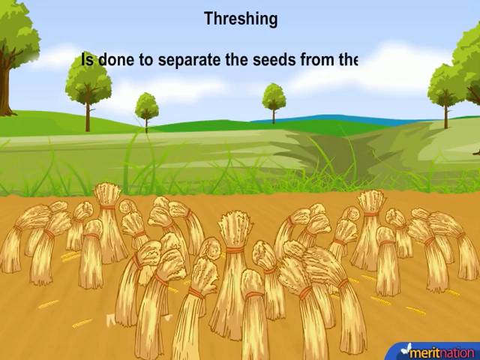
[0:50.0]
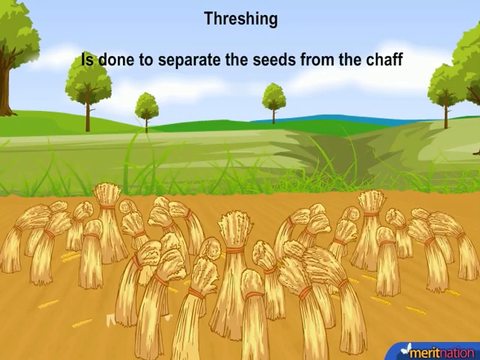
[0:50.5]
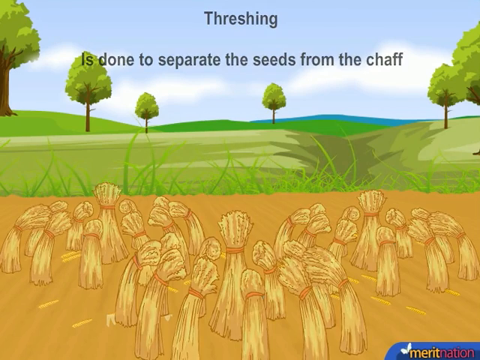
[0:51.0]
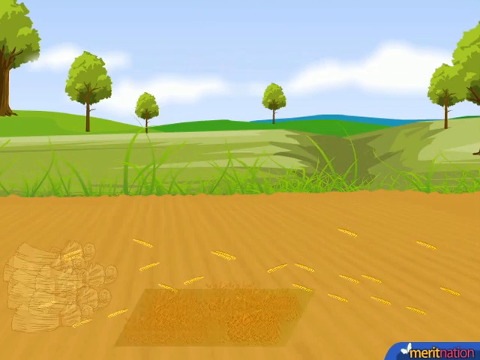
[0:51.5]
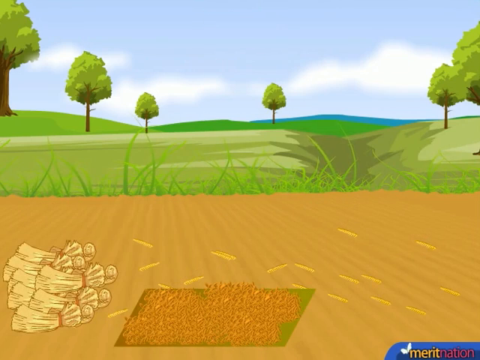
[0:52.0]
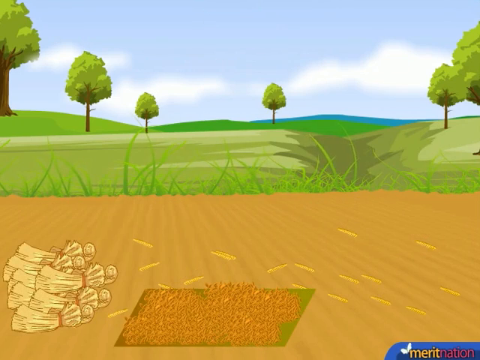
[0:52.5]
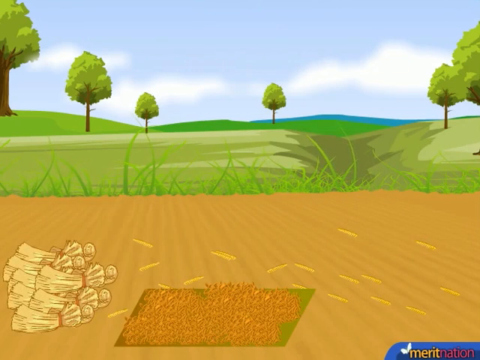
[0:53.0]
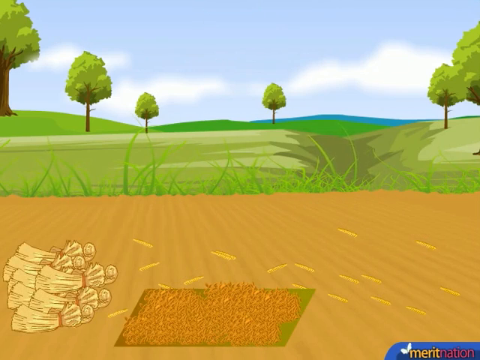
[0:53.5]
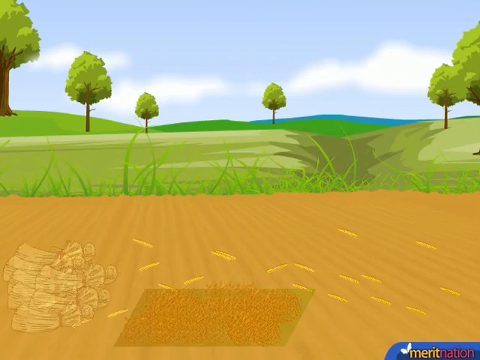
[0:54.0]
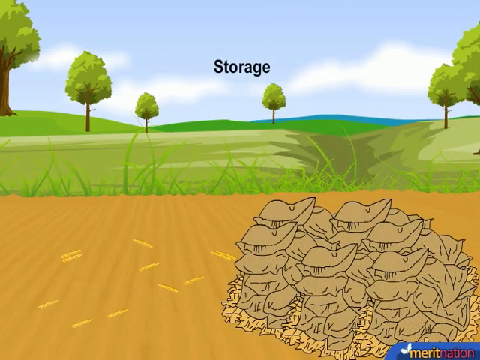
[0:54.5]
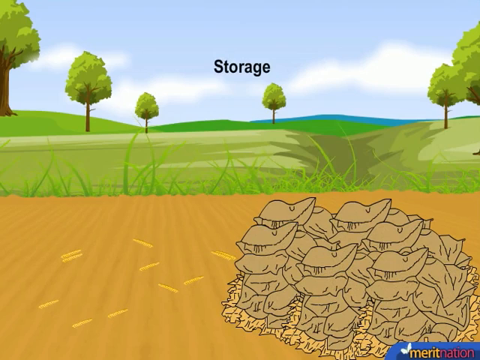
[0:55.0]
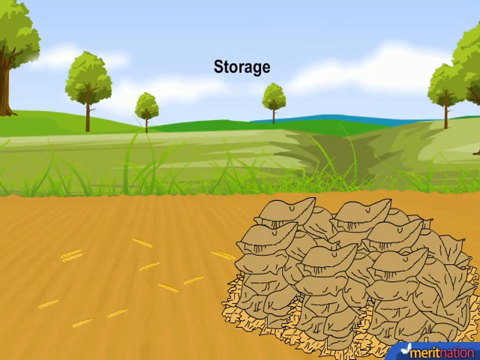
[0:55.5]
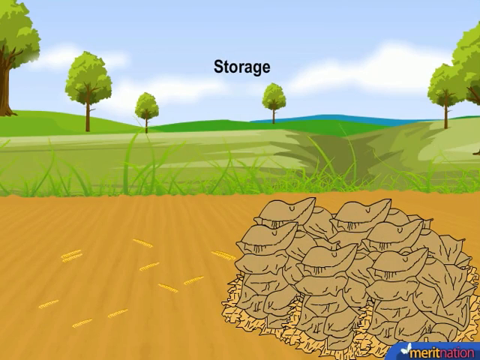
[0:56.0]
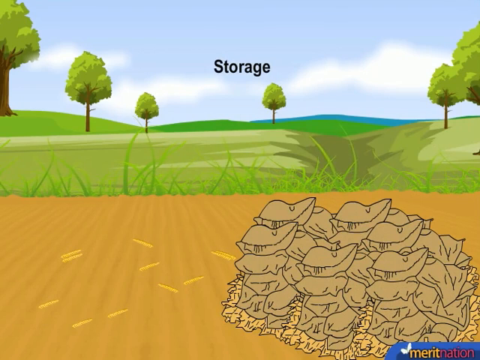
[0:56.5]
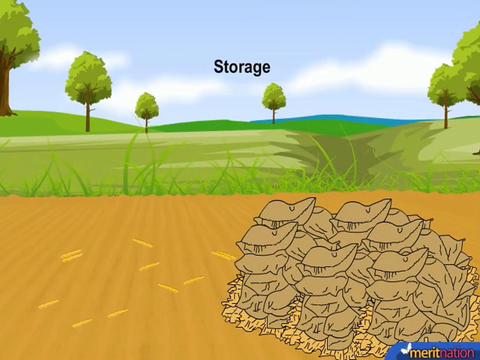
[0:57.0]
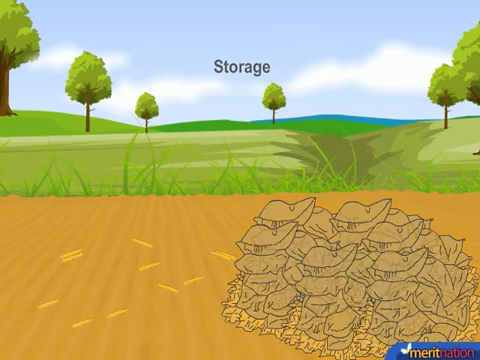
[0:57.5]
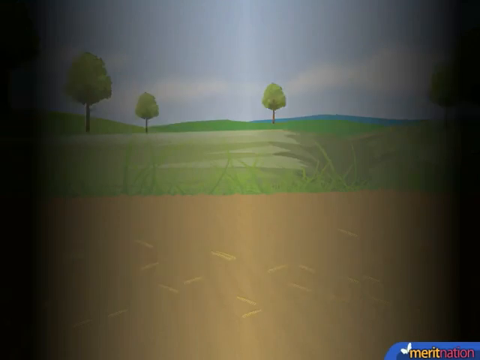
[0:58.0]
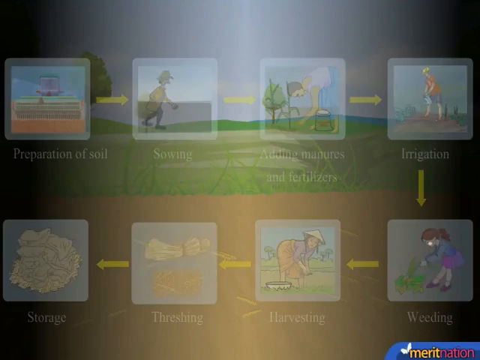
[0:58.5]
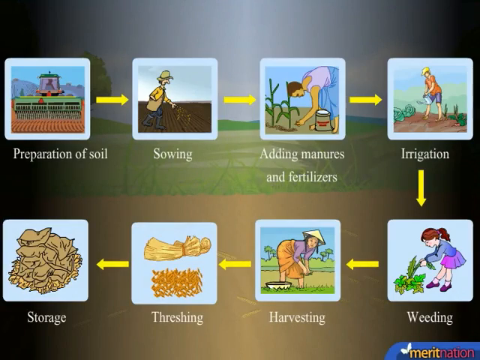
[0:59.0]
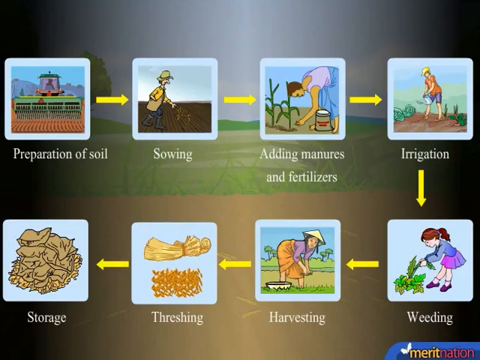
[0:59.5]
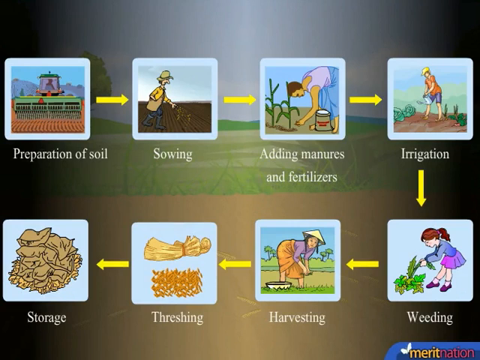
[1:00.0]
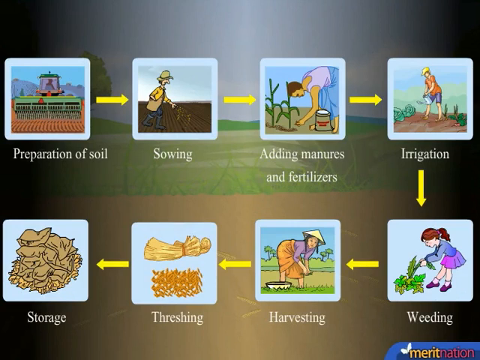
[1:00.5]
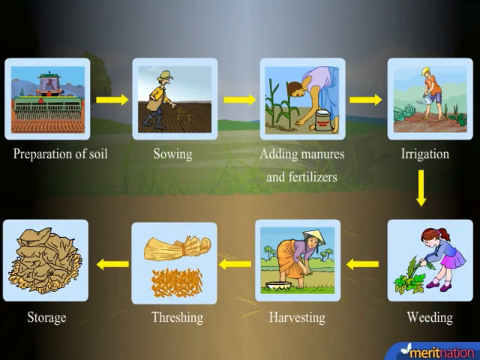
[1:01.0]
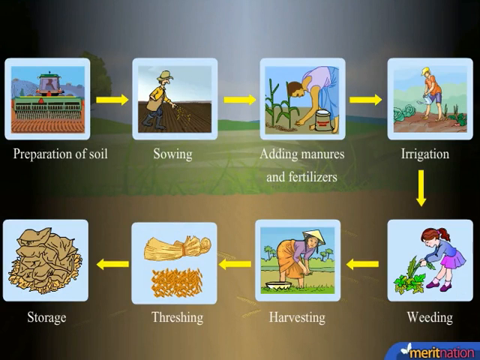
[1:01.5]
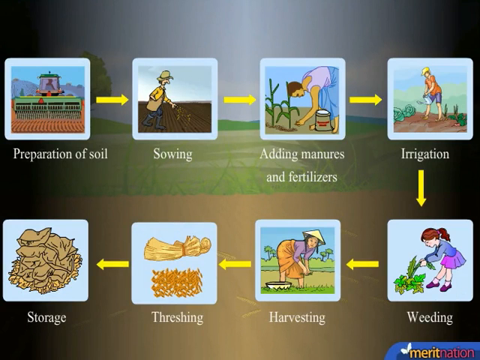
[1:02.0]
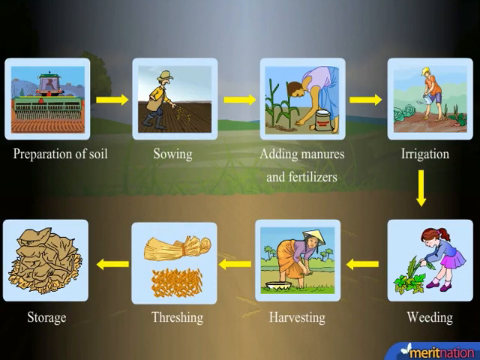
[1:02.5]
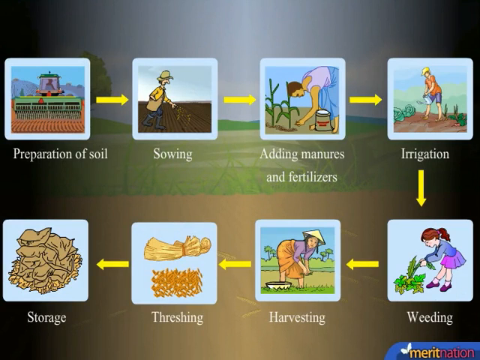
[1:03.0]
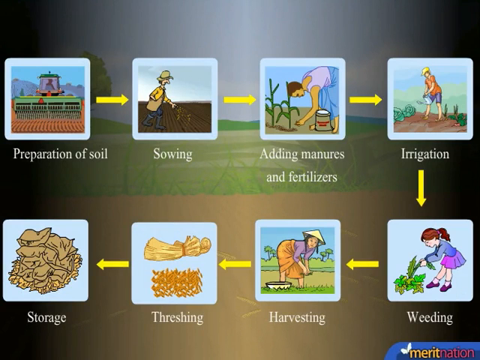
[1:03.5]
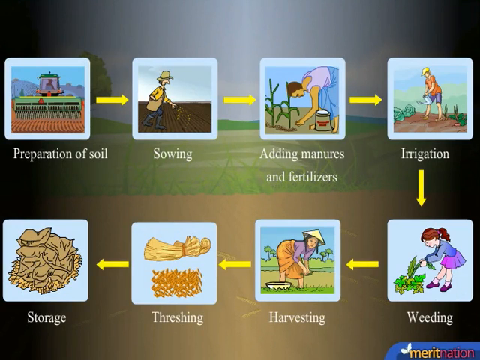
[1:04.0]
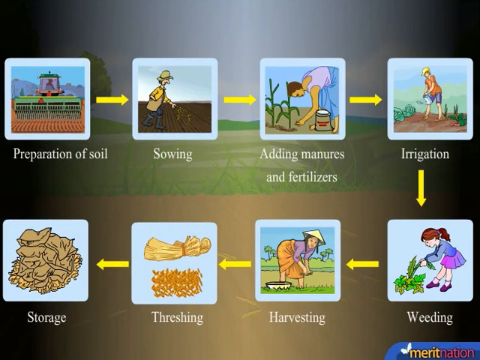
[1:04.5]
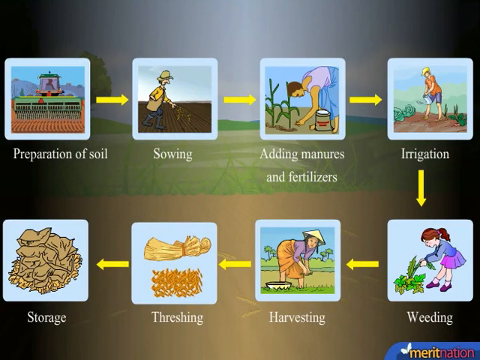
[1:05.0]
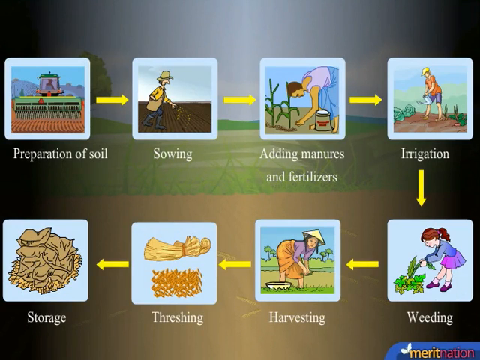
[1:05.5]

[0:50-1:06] Text says "threshing," and then the video switches to a portion that says "storing." Next comes a chart showing the steps of how to irrigate and seed the lawn. It starts with preparation of soil, and yellow arrows point to each box, each with a picture showing what step needs to be done. Steps say "sowing" and "adding manures and fertilizers," followed by irrigation, then weeding, then harvesting and threshing, and the final box of the process is storage. This chart is the very last screen of the video, with eight steps presented in the boxes.